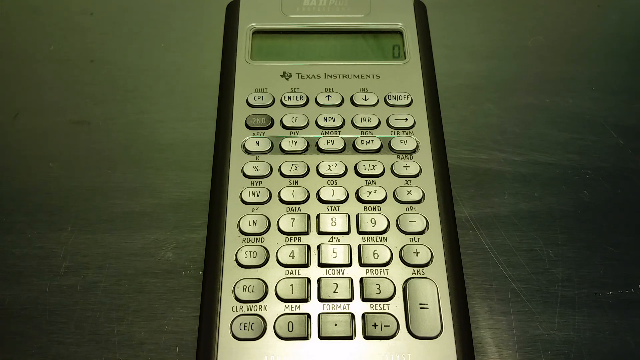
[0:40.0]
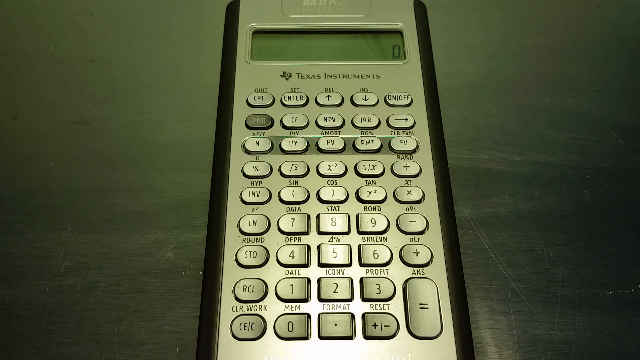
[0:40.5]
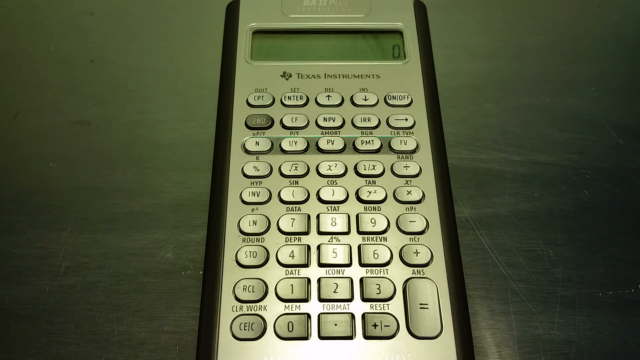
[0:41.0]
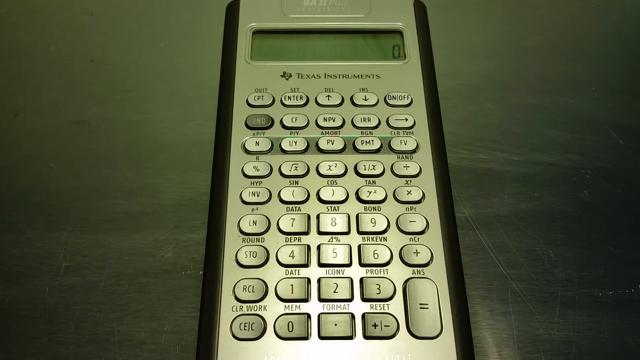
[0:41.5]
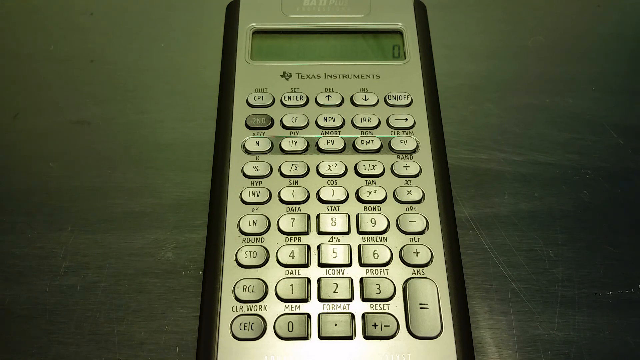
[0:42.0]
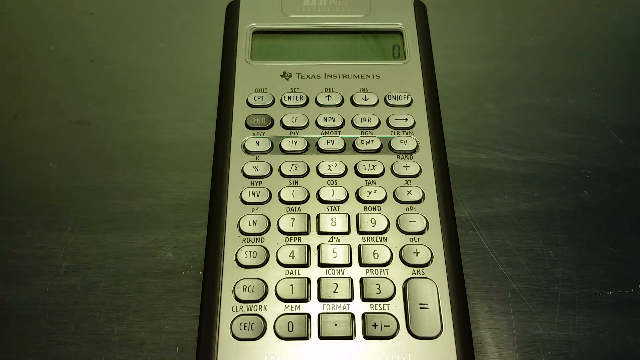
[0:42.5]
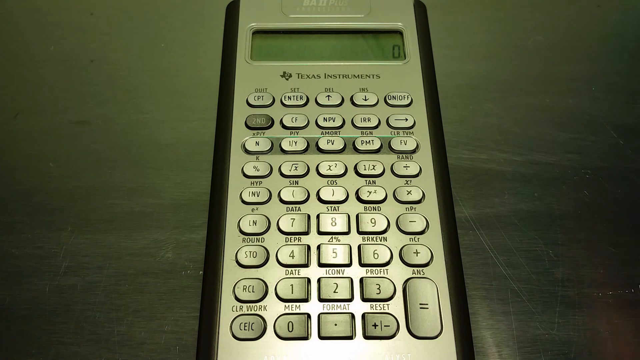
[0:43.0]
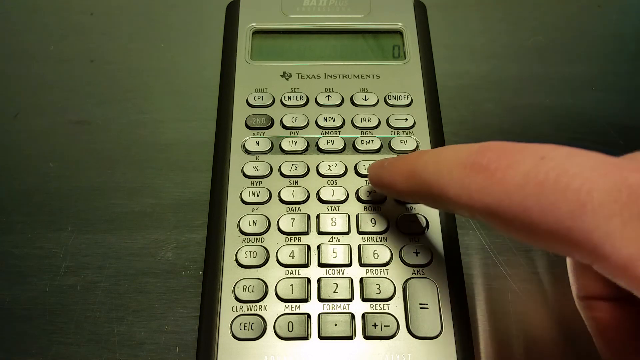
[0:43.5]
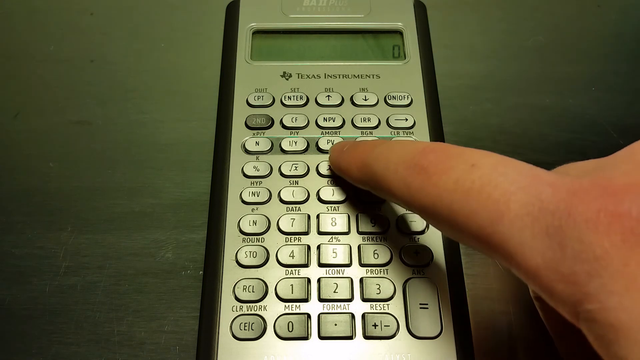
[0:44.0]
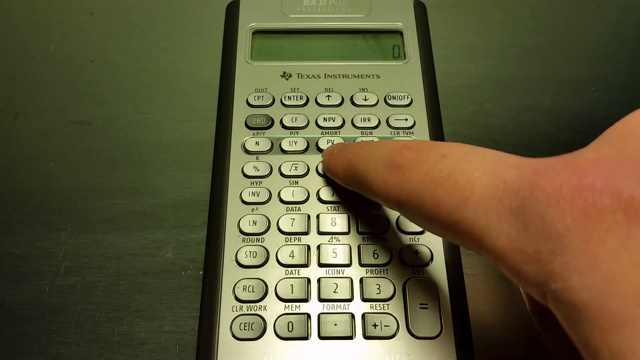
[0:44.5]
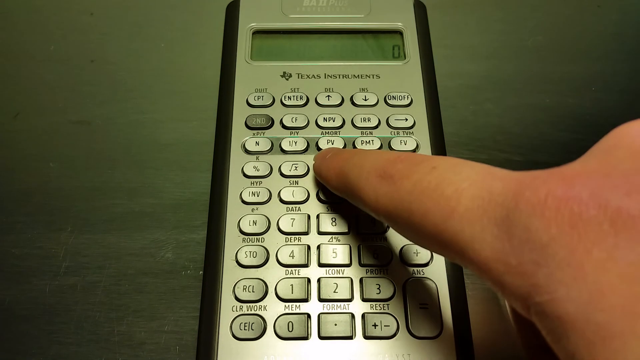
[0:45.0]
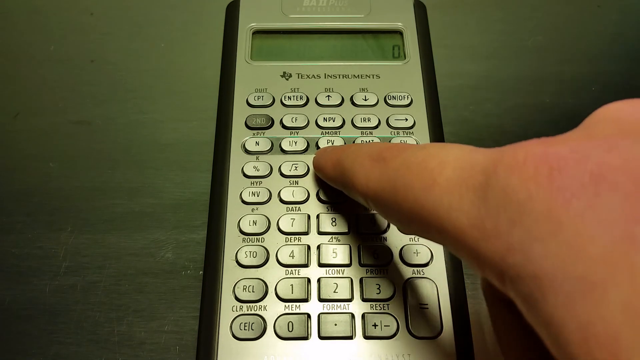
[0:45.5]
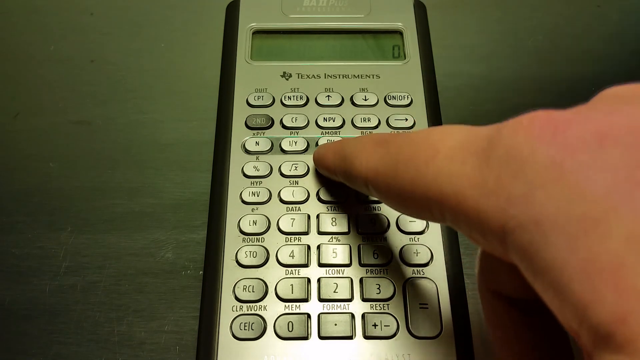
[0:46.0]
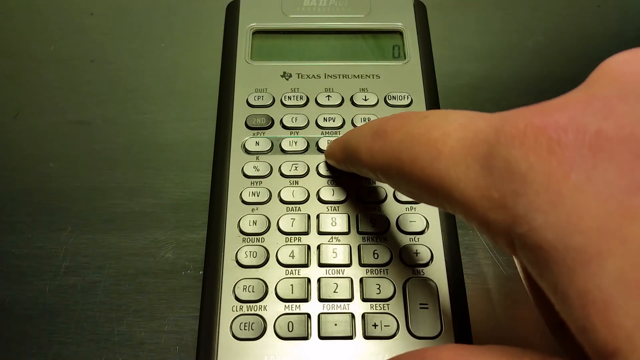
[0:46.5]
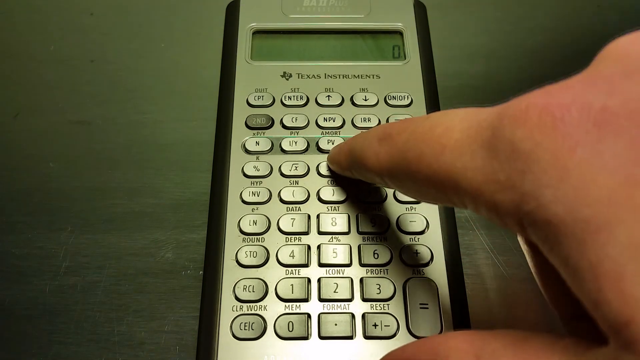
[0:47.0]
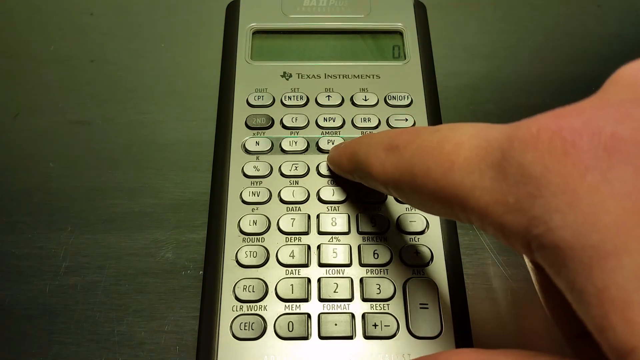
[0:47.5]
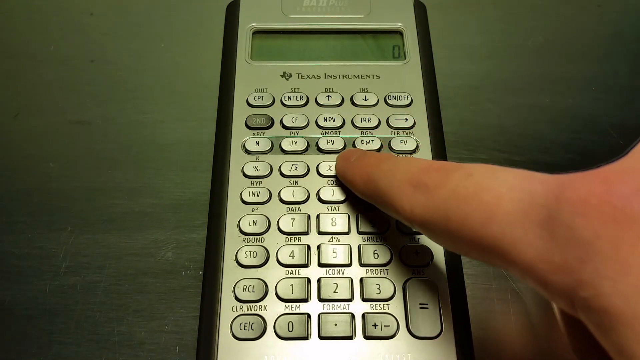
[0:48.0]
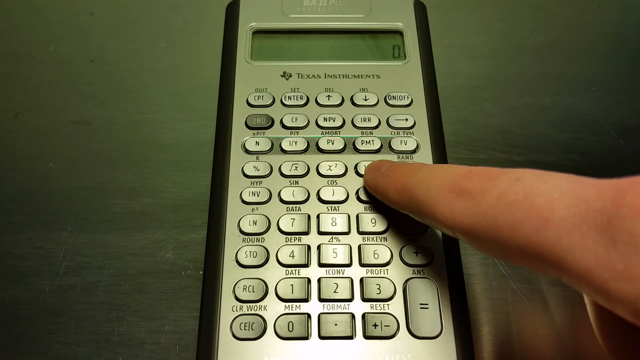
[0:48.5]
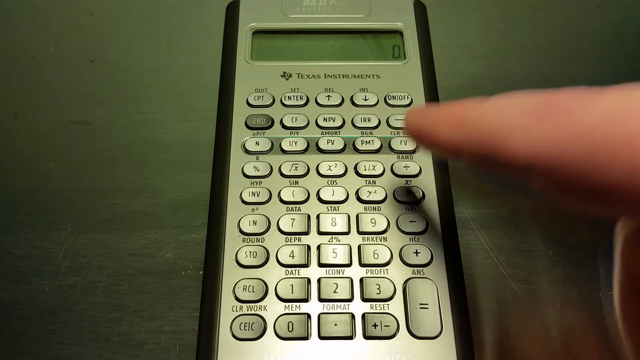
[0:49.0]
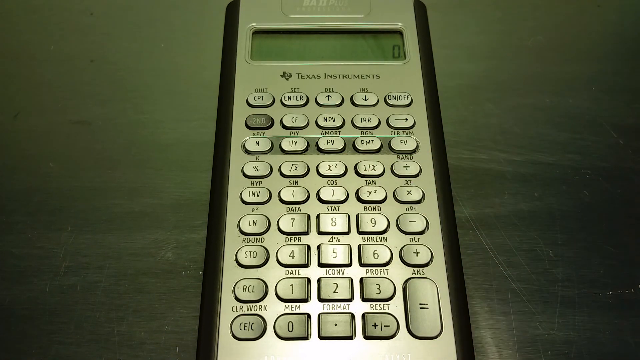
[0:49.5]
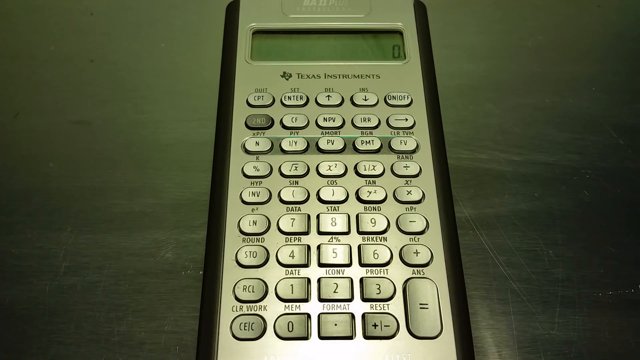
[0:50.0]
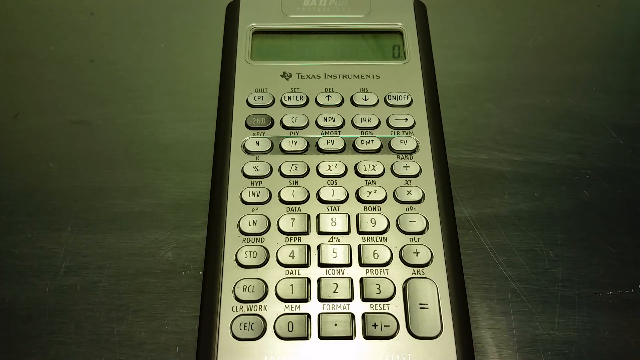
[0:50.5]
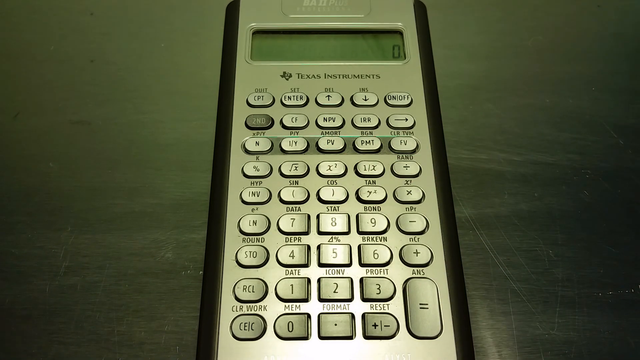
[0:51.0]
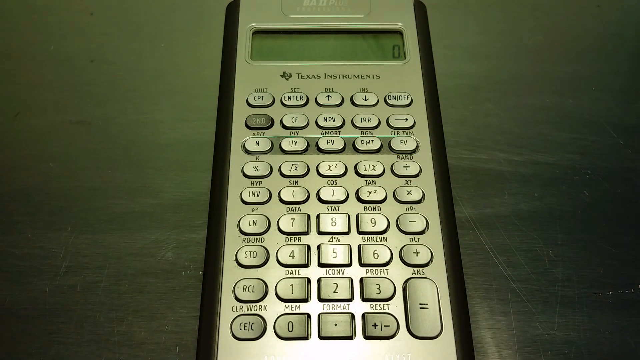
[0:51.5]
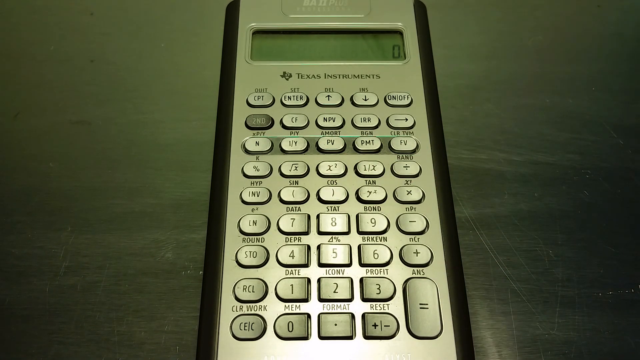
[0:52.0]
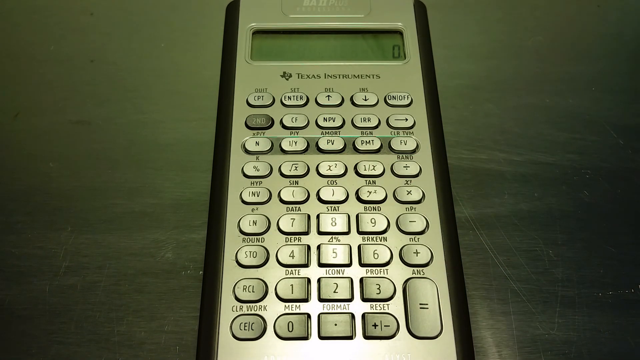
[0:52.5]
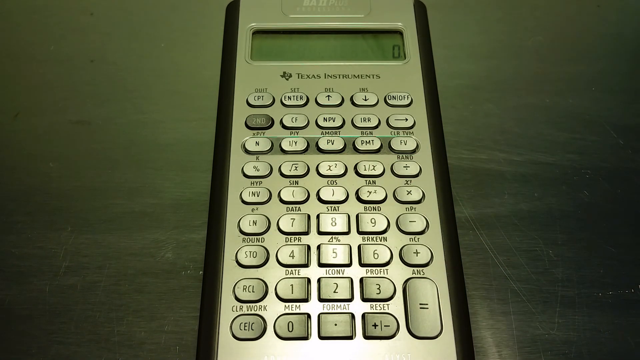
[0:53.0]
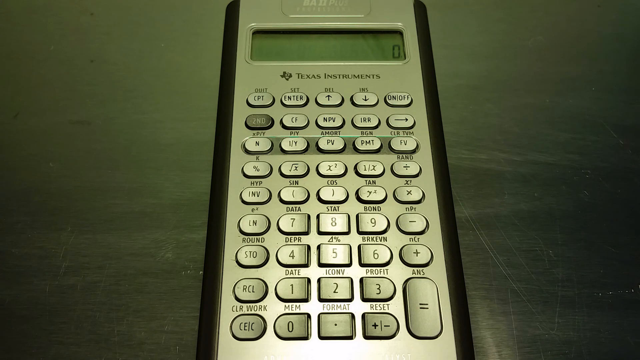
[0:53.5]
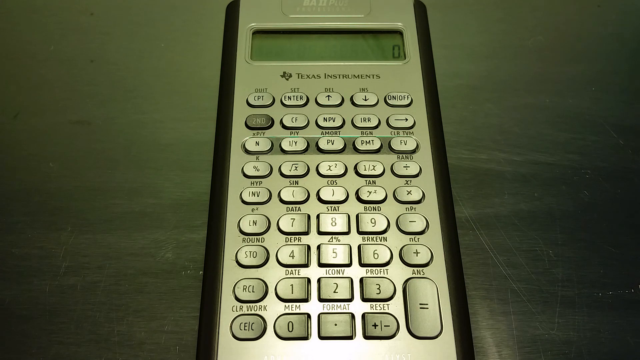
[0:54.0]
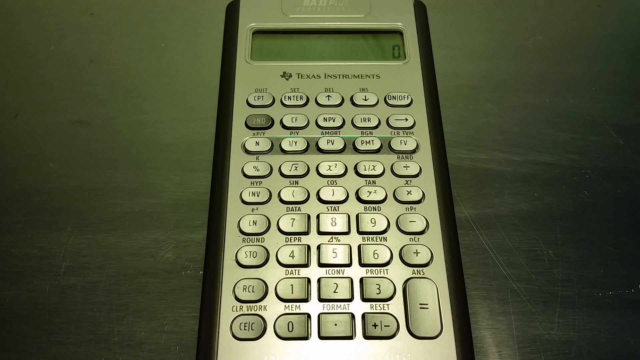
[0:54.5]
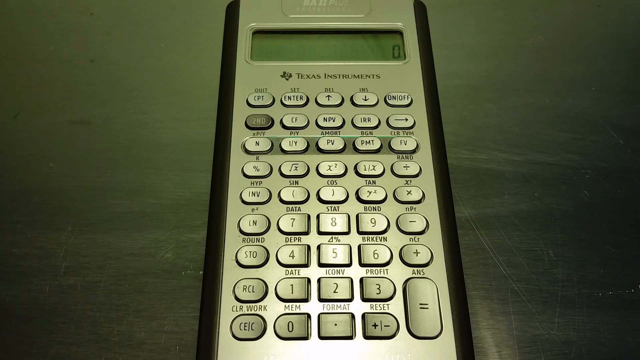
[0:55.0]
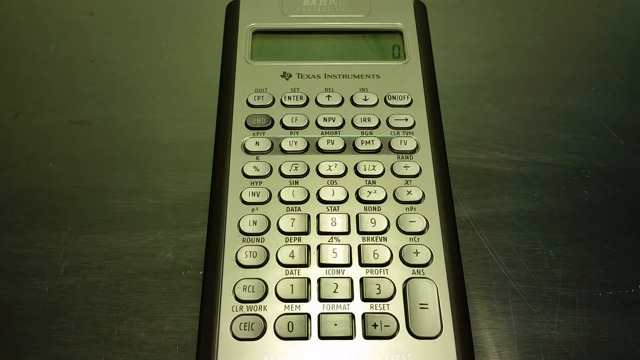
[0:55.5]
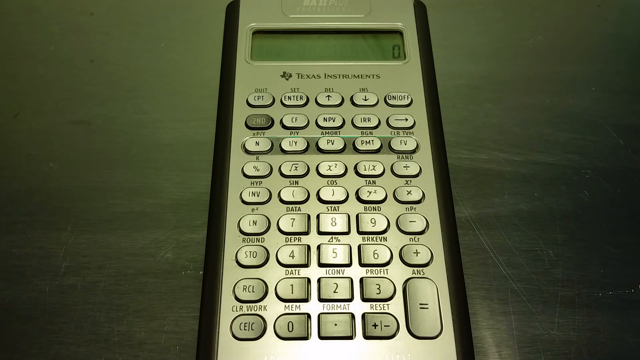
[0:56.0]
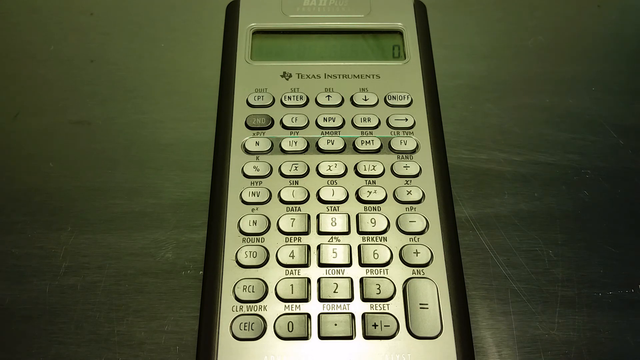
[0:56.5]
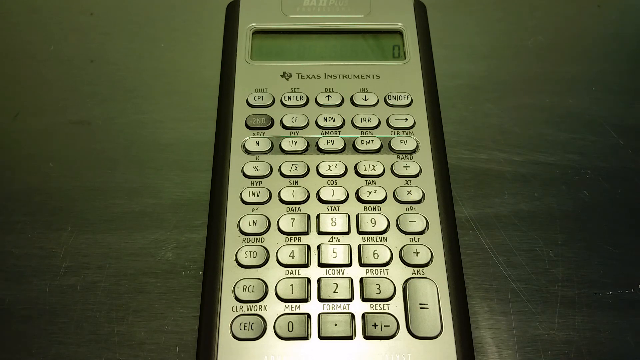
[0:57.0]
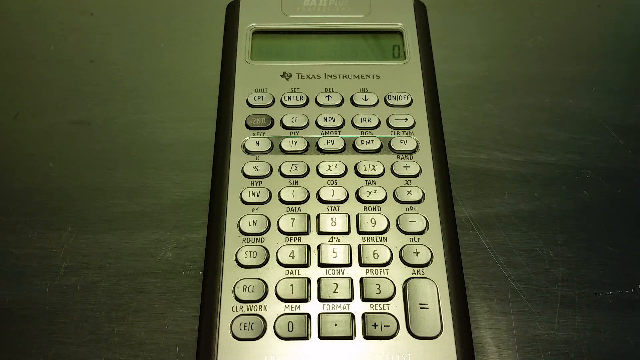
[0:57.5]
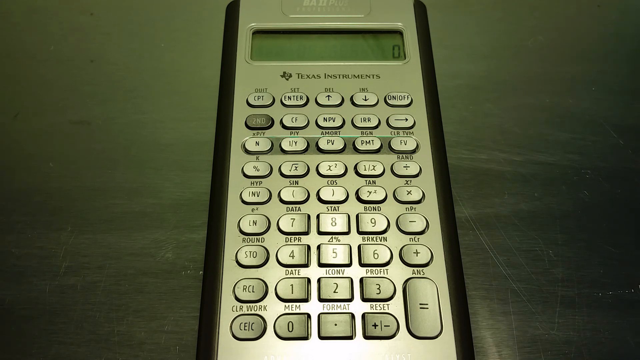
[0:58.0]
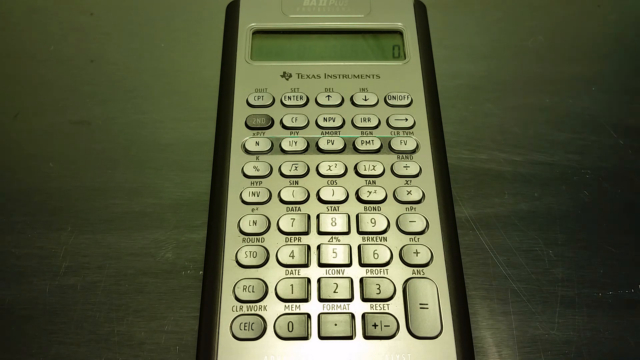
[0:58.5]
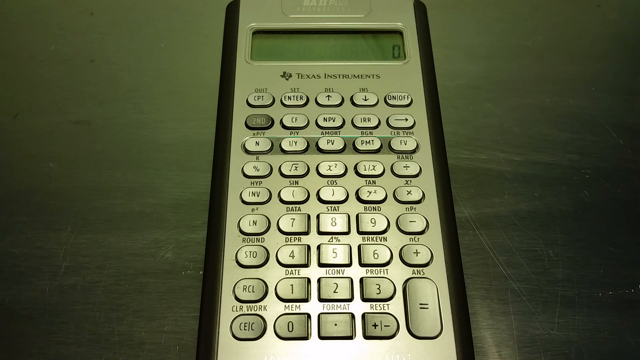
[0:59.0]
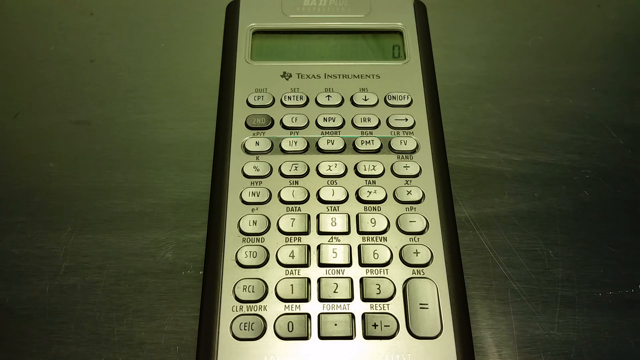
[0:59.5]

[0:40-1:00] A finger presses the squared and PV buttons together. On the fifth row there is an invoice button with "HYP" on top, then sin, then a sign that cannot be identified, possibly an X or Z, which looks like it has a two on top, and on the far right a multiplication sign. The sixth row has pi. The seventh row has the number 7 with "data" on top, 8 with "stat" on top, 9 with "bond" on top, and on the far right a minus sign with what appears to be "NPY". The next row has an STO button with "round" on top, then 4 with "DDEPR", then 5 with a right-angle triangle and a percentage on top, then 6 with barely visible letters, something like "BRKEVN", and on the far right a plus sign with "NCR" on top.